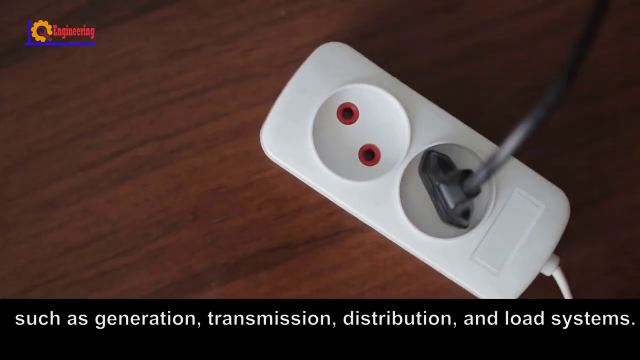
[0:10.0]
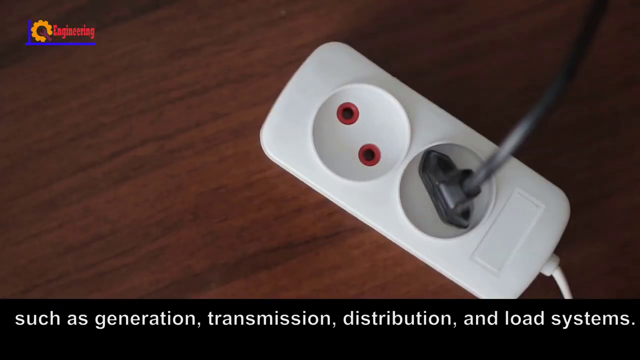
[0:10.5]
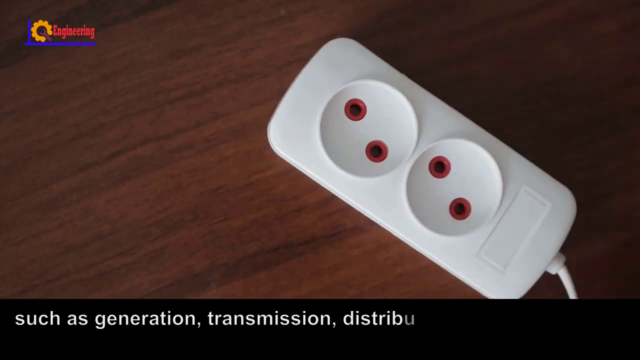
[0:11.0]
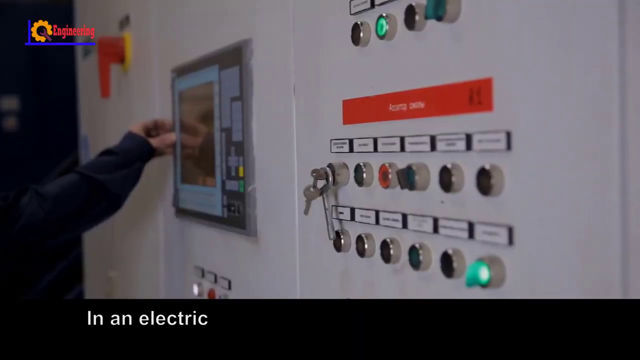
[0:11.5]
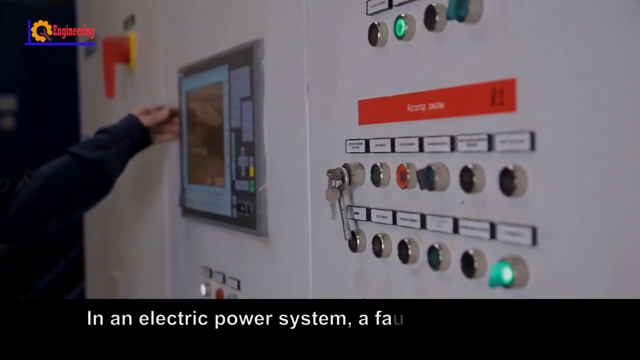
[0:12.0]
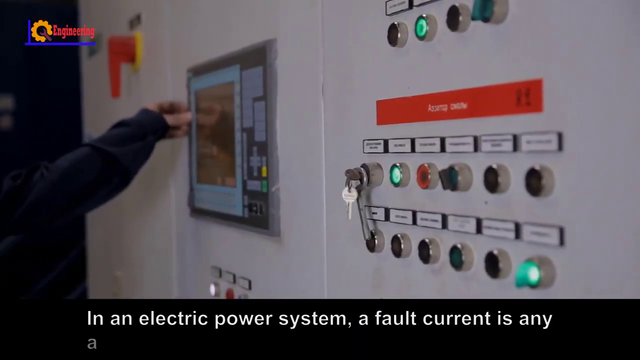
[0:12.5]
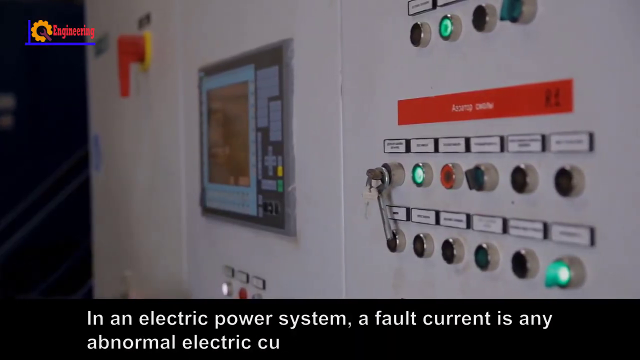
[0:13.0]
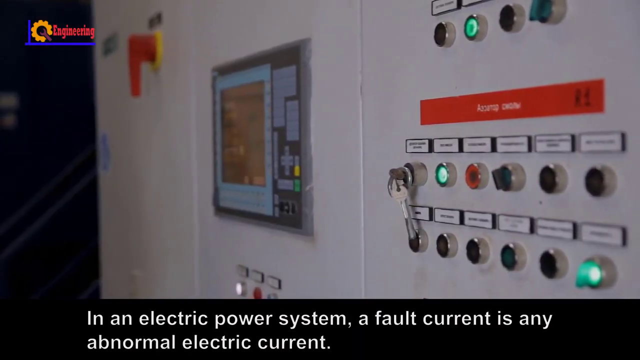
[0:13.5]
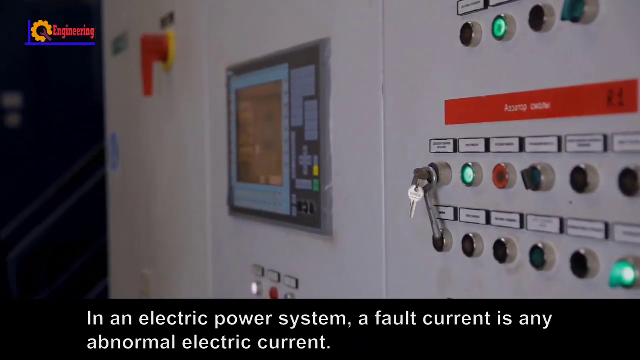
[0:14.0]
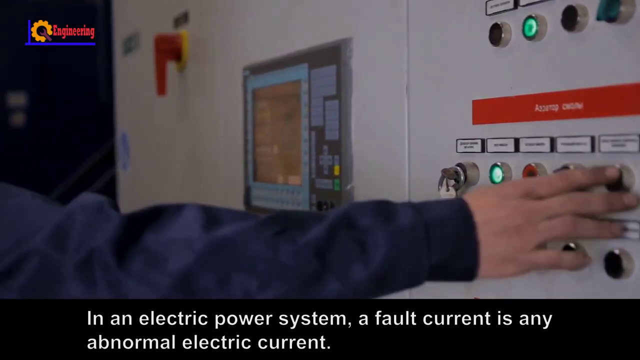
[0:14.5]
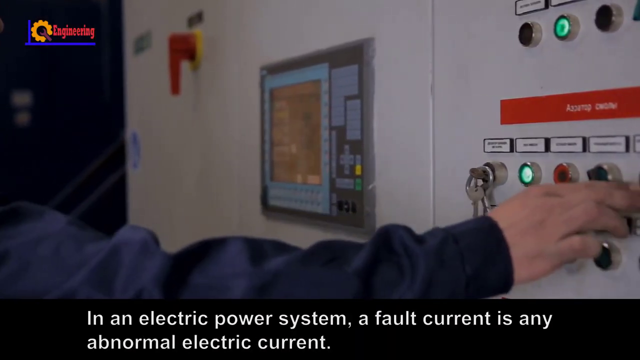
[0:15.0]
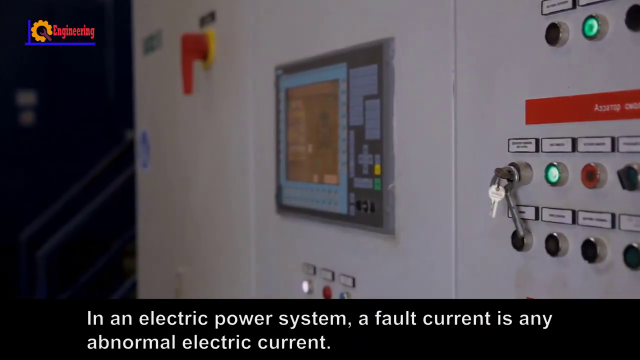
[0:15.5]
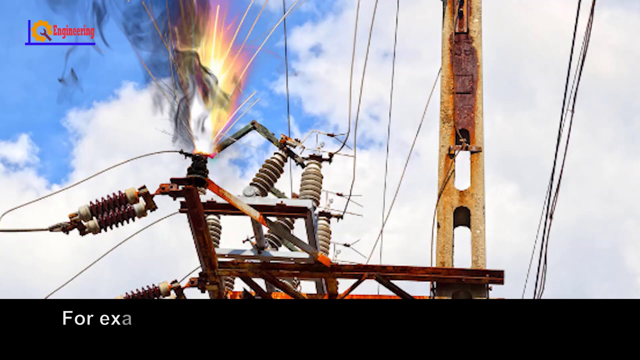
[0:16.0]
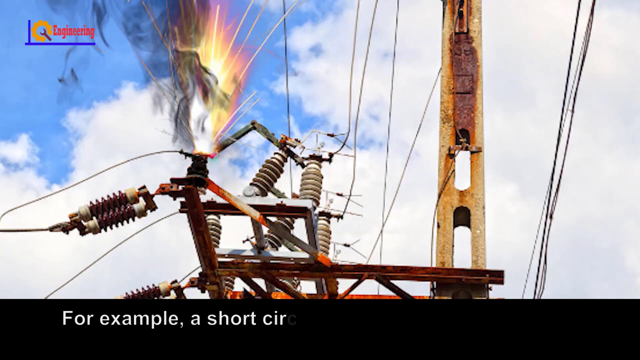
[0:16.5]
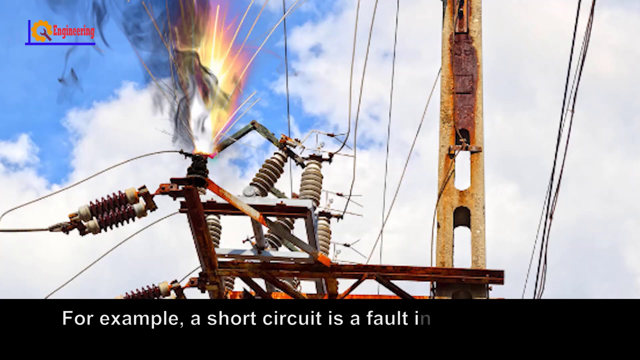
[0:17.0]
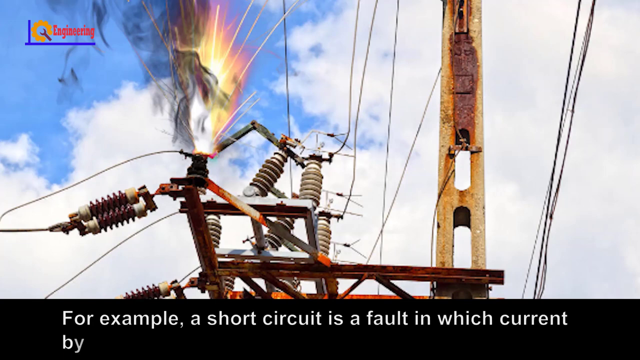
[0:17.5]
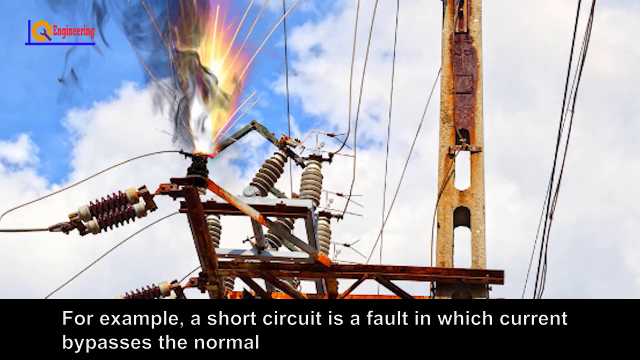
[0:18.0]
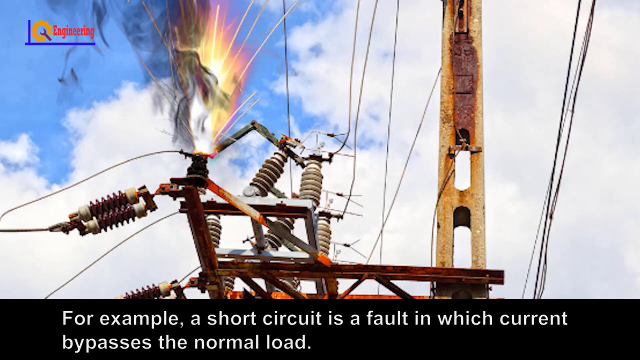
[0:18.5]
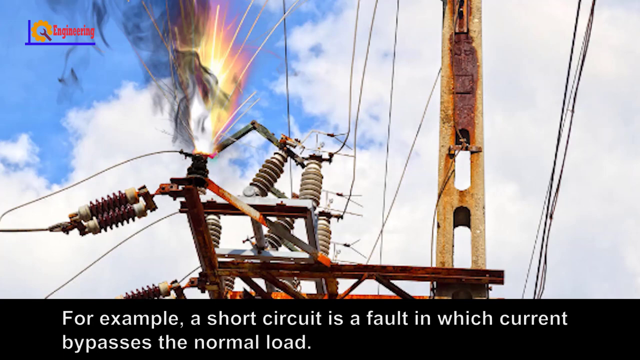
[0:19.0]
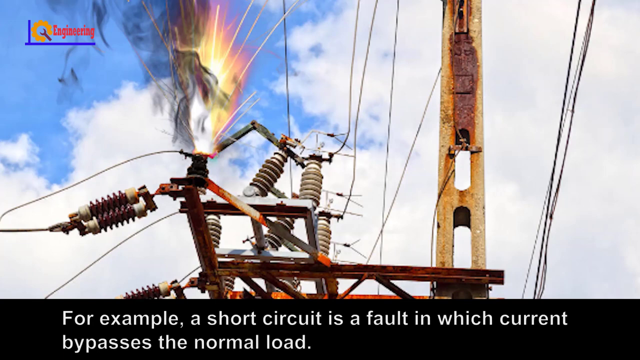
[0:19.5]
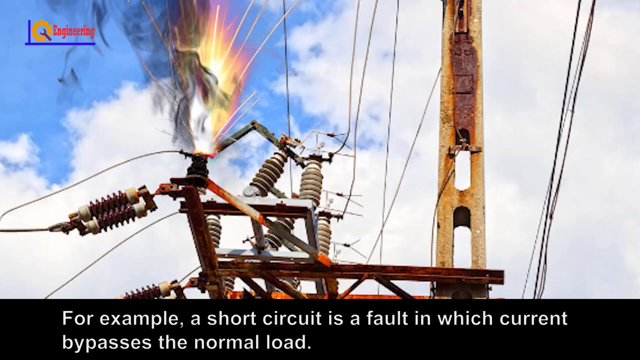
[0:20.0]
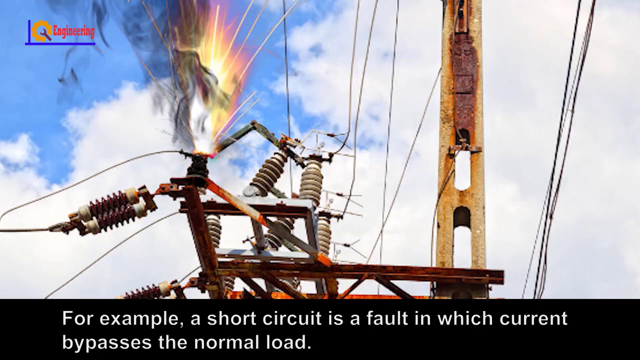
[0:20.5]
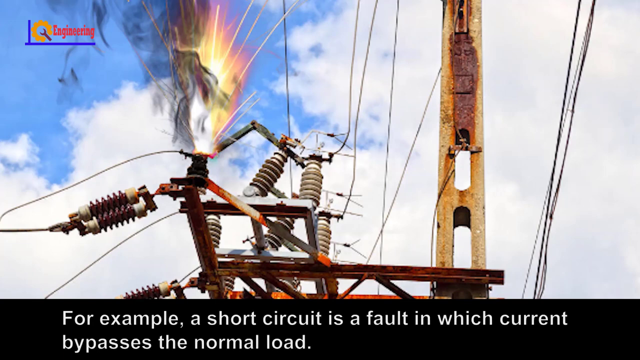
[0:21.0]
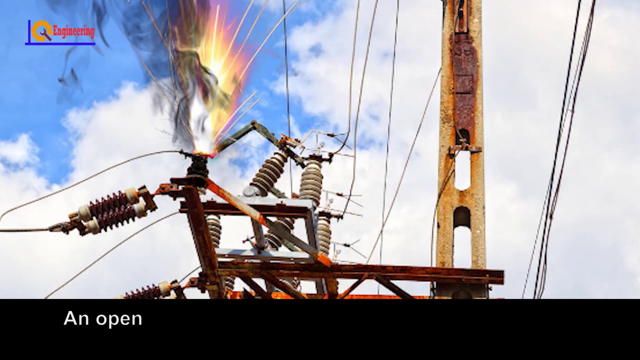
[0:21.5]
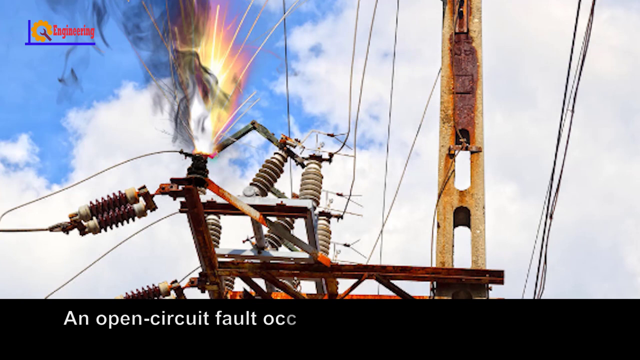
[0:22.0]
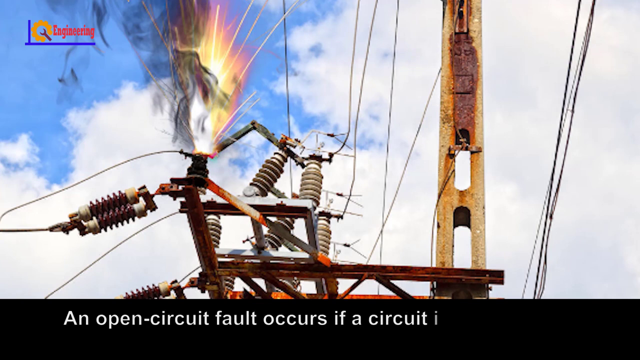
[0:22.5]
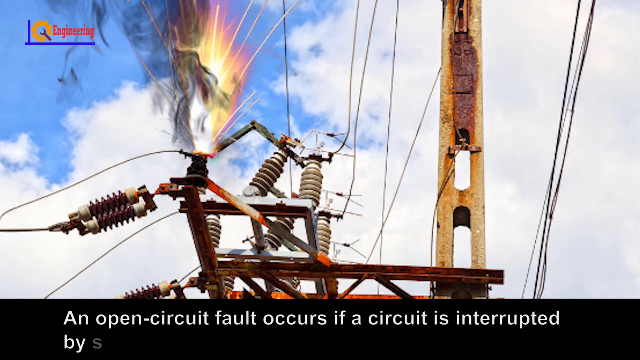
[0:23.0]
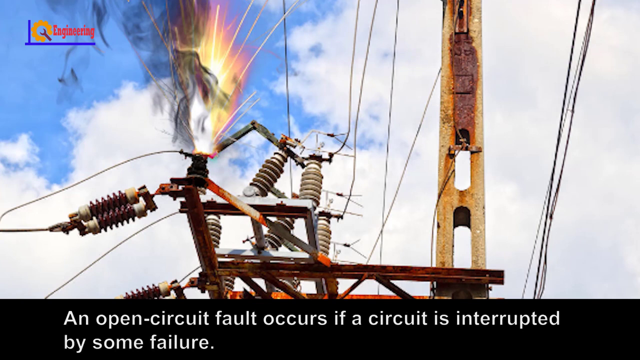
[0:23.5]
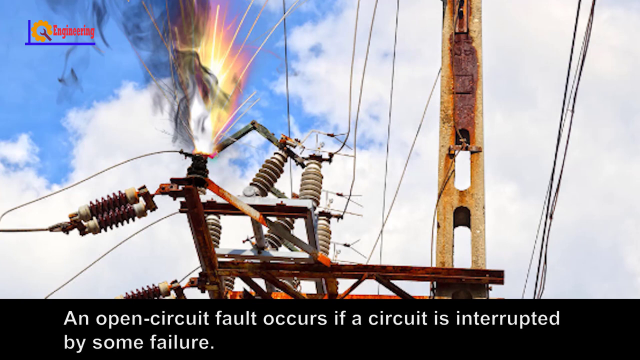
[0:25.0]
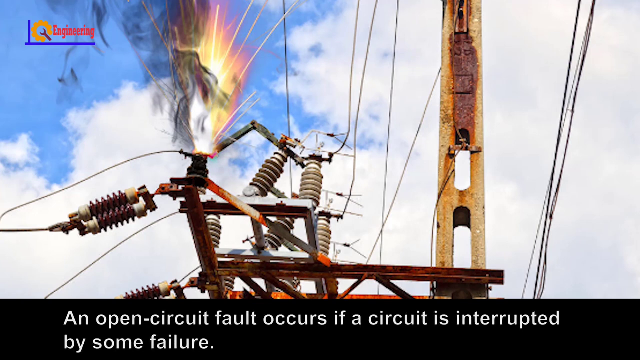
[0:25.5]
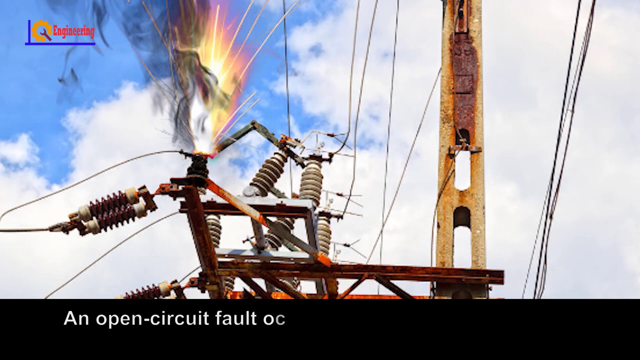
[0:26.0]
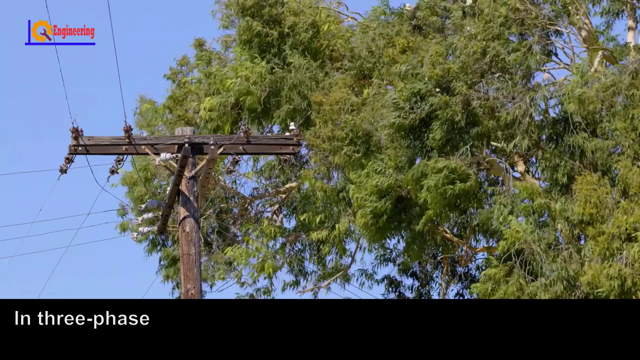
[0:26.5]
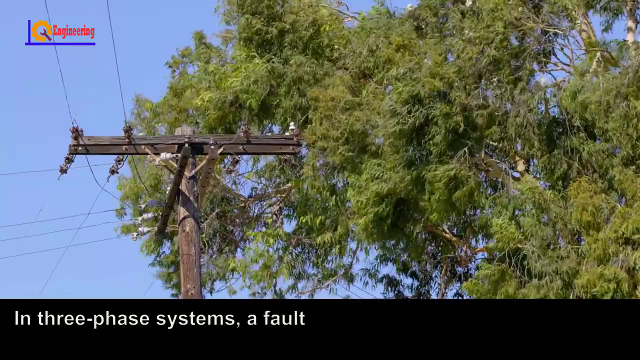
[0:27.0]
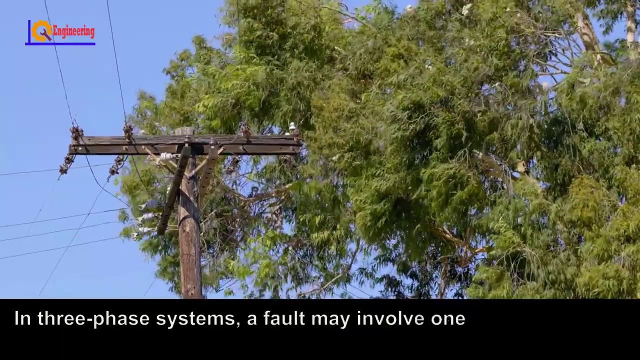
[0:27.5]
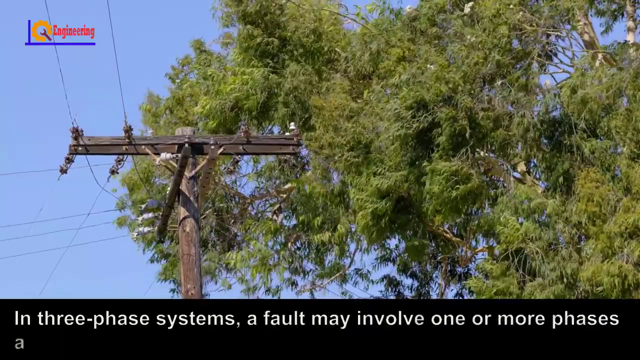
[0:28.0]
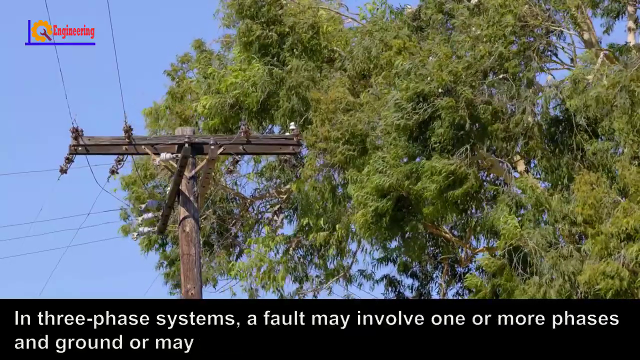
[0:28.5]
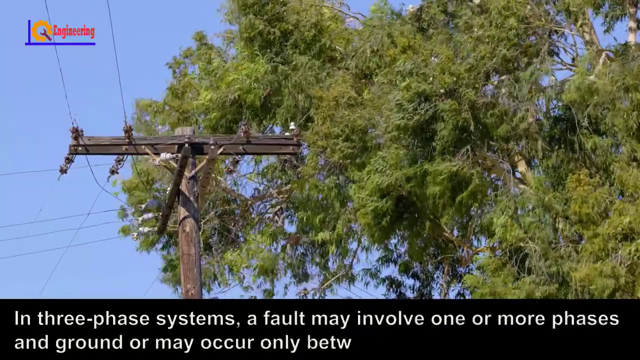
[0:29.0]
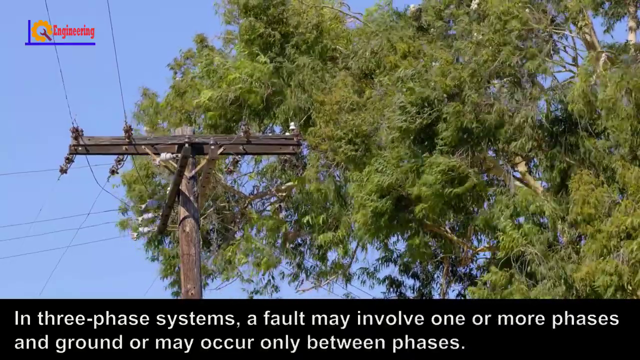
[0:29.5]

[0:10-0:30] The device is unplugged from the outlet, and an example of an electrical power system is shown. A picture of a blown circuit follows, and the picture of the blown power line shows sparks. Footage shows wind blowing near one of the wired power poles. An operator inside the plant appears to turn a key and press a button. A tree blows in the wind, and the final slide appears to show both the wind and the tree blowing near the line.